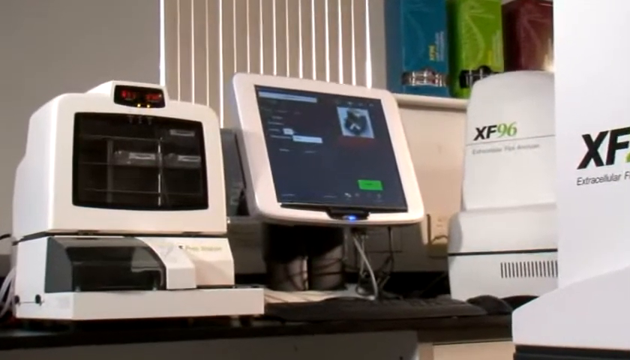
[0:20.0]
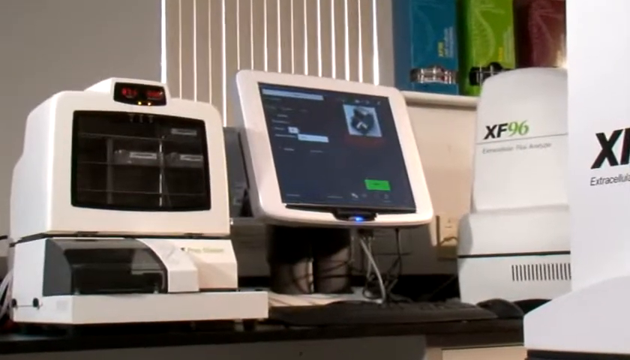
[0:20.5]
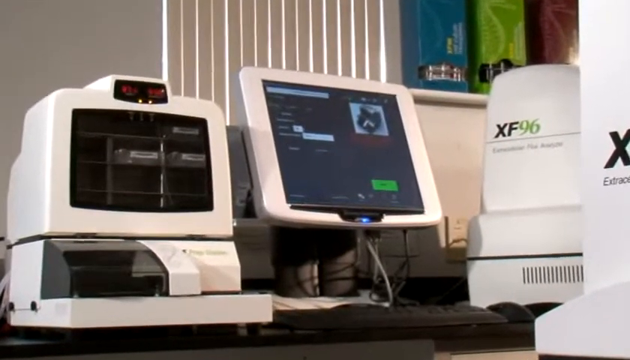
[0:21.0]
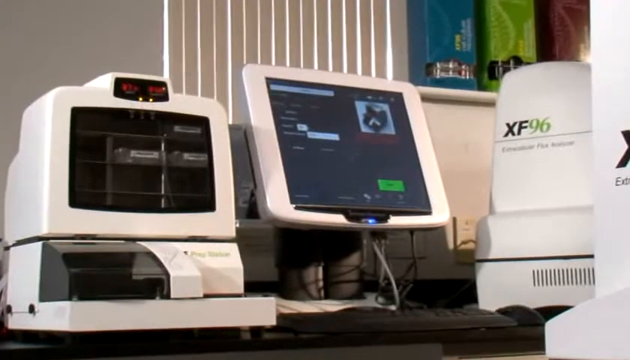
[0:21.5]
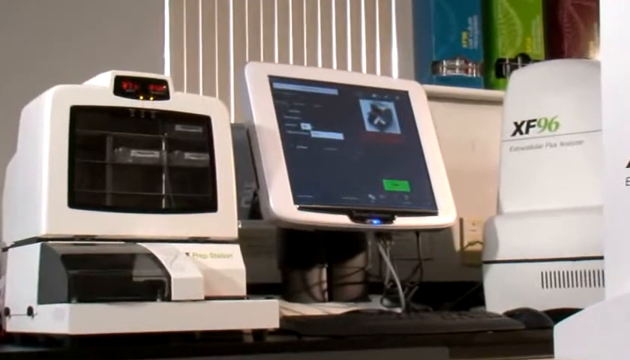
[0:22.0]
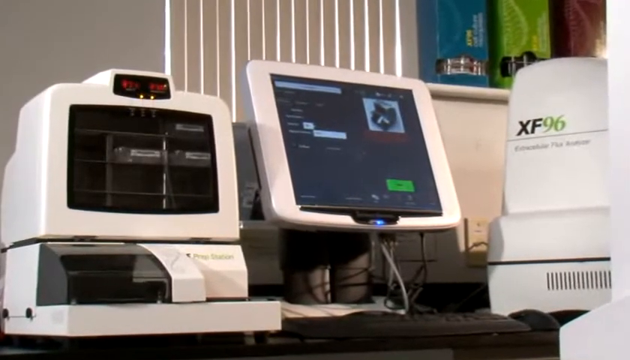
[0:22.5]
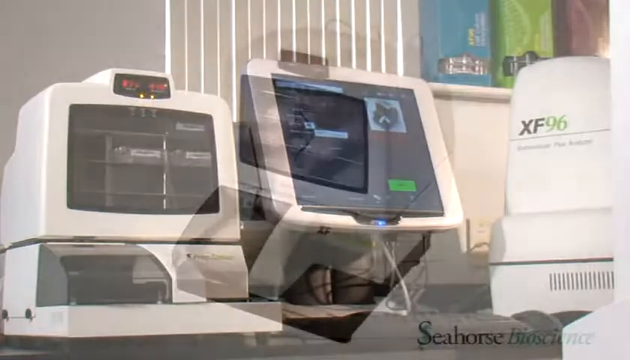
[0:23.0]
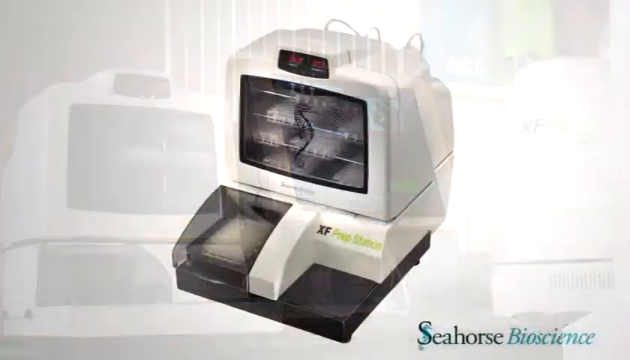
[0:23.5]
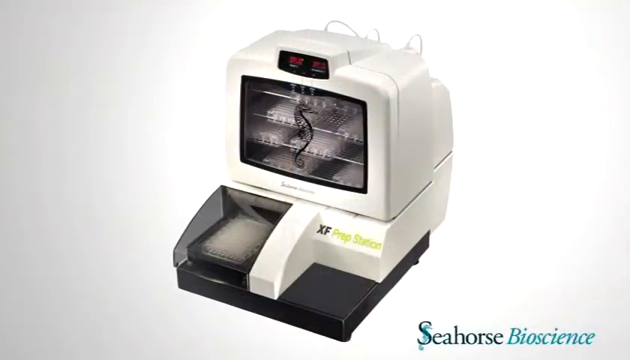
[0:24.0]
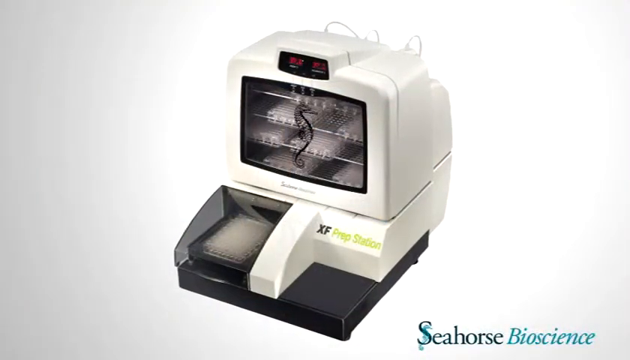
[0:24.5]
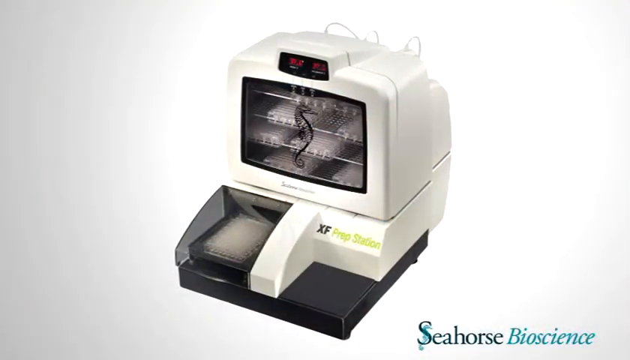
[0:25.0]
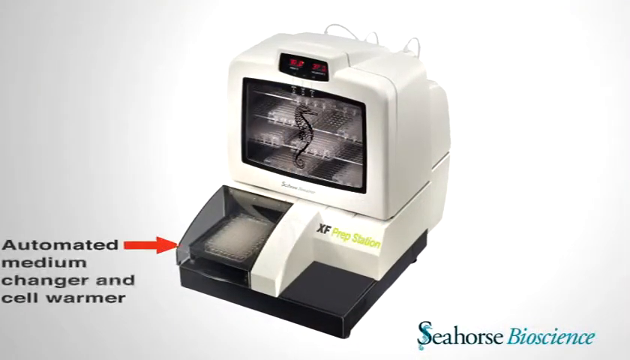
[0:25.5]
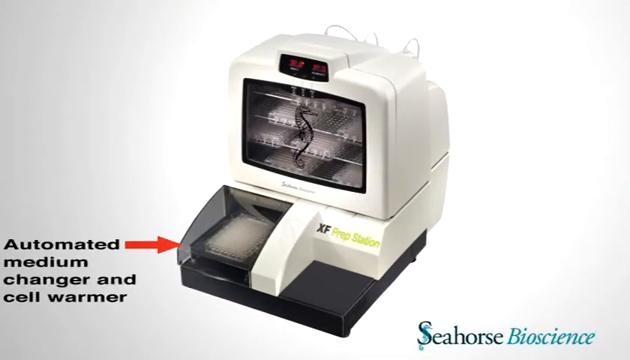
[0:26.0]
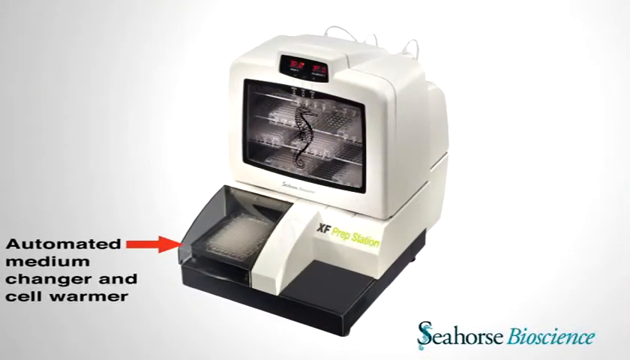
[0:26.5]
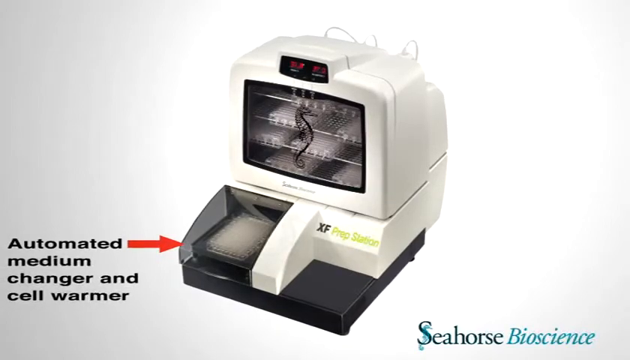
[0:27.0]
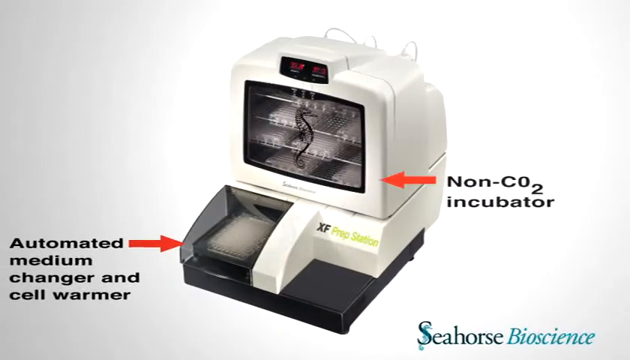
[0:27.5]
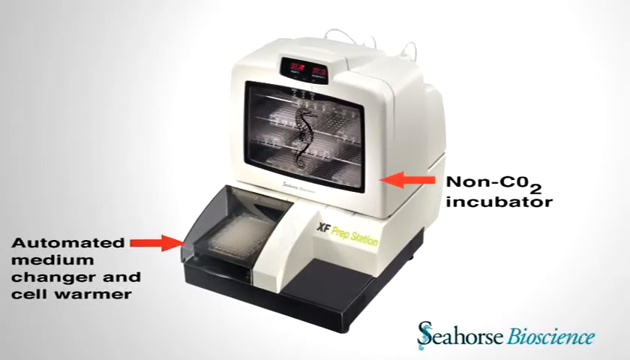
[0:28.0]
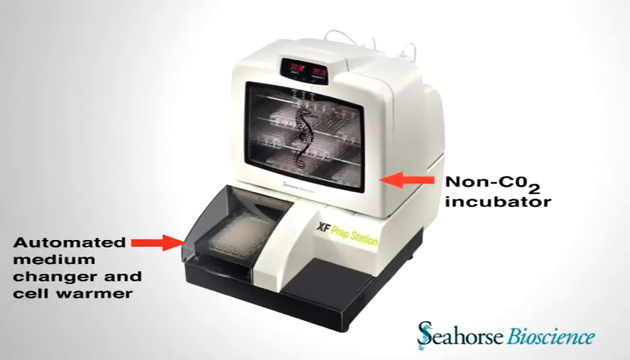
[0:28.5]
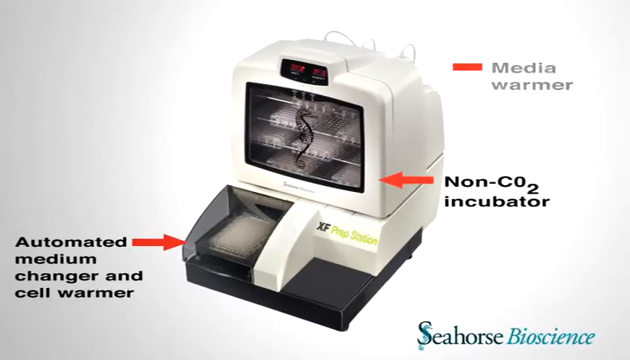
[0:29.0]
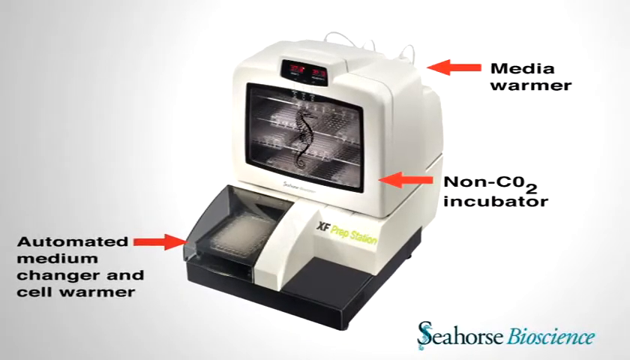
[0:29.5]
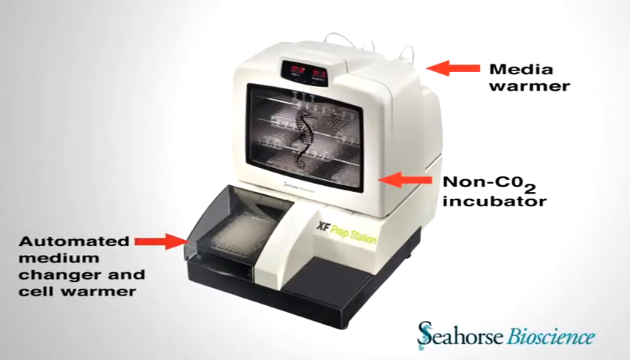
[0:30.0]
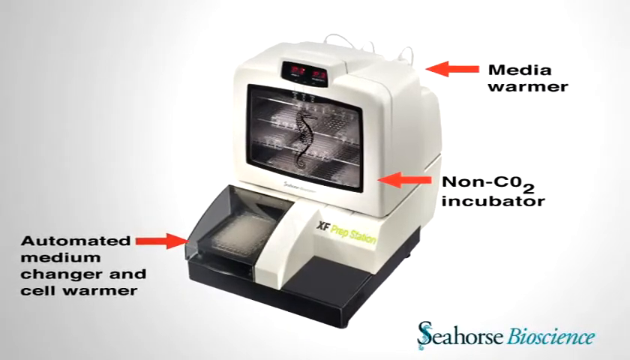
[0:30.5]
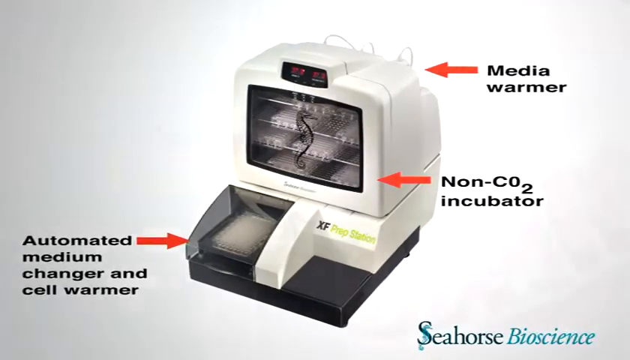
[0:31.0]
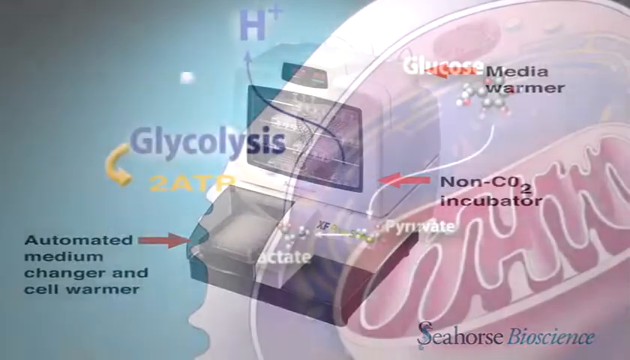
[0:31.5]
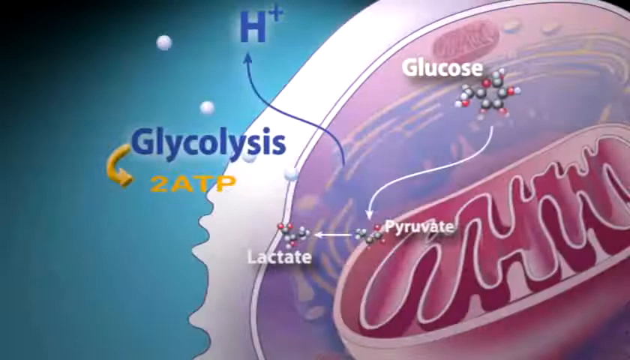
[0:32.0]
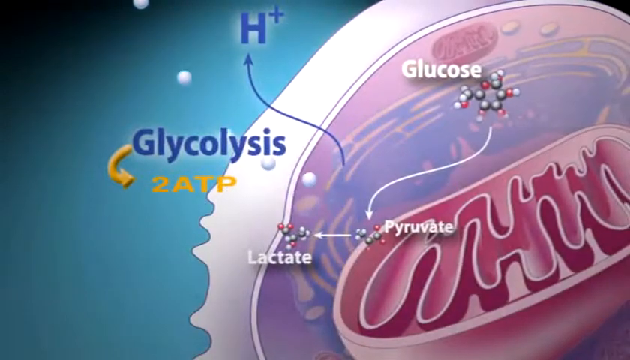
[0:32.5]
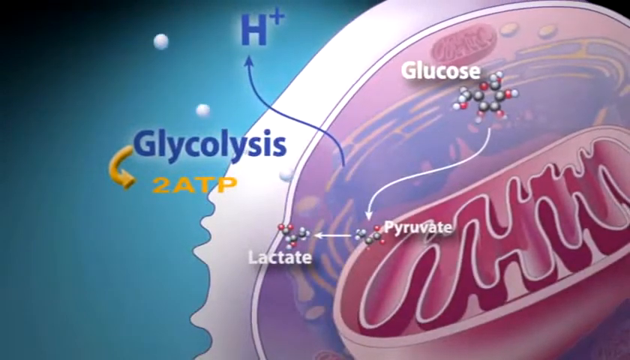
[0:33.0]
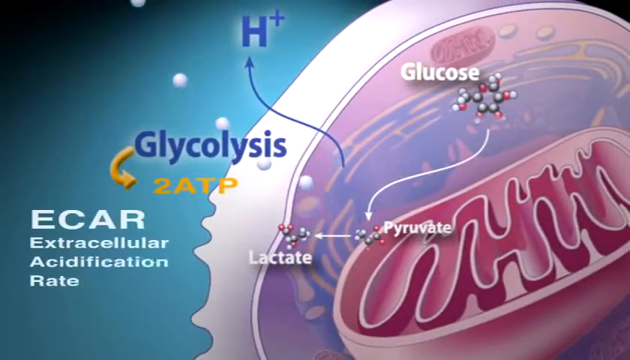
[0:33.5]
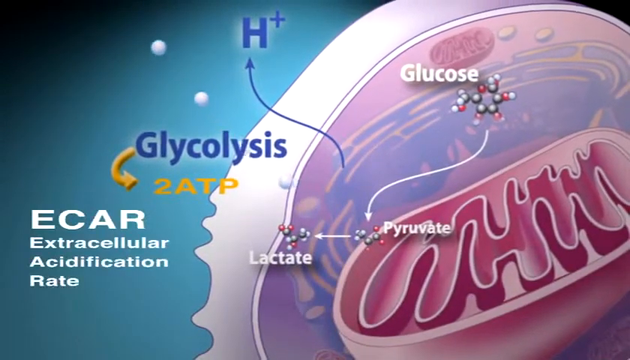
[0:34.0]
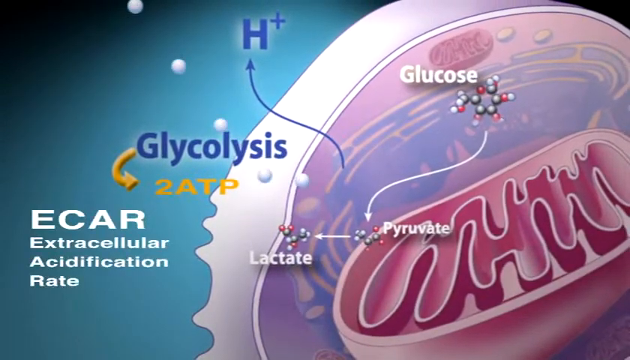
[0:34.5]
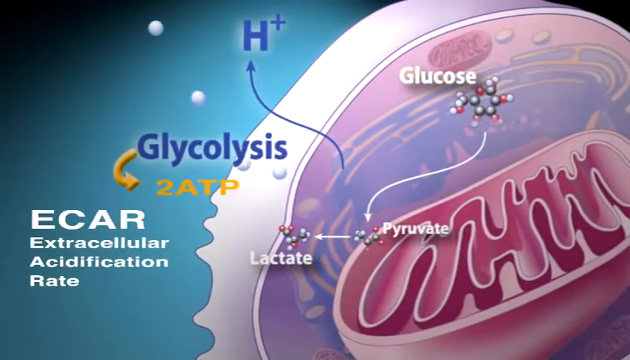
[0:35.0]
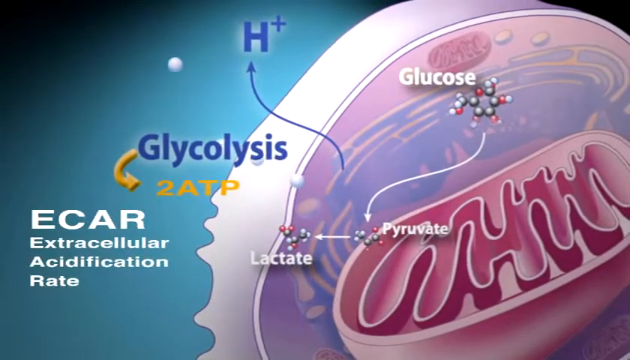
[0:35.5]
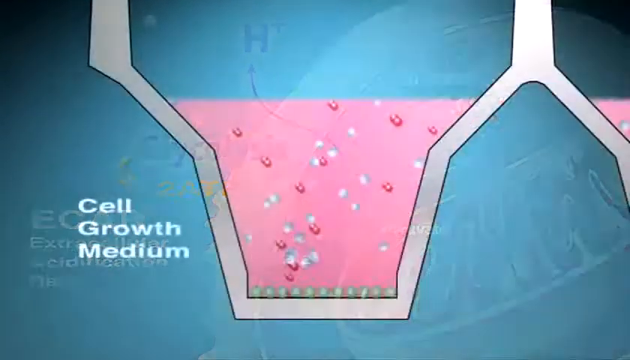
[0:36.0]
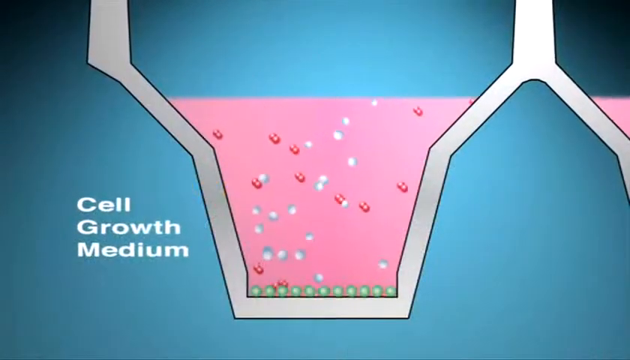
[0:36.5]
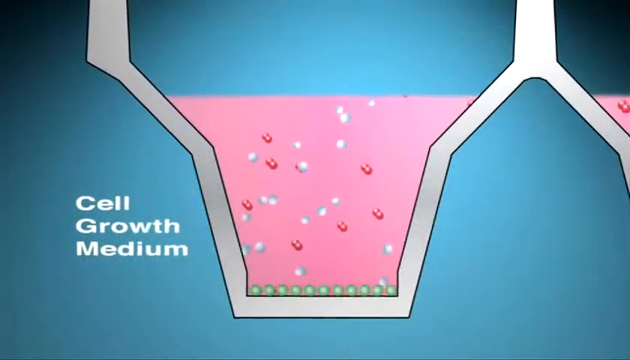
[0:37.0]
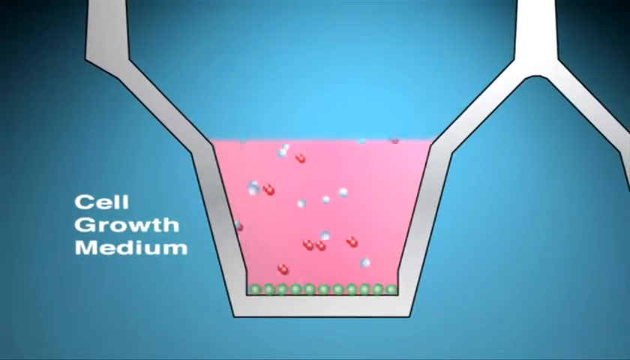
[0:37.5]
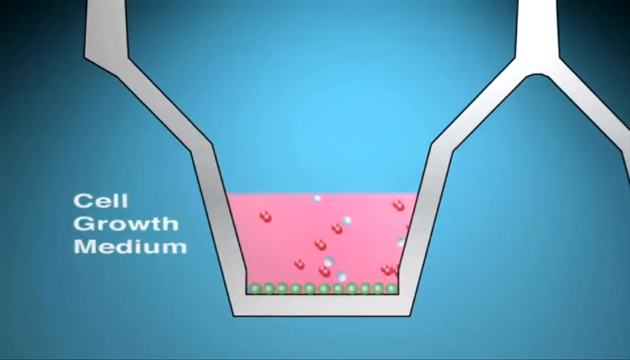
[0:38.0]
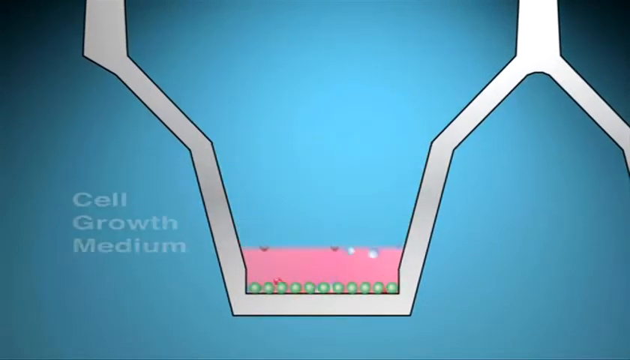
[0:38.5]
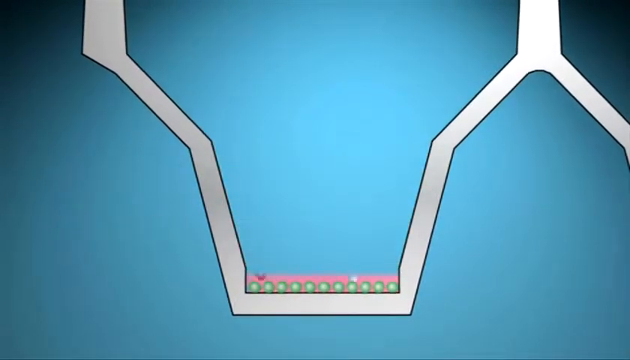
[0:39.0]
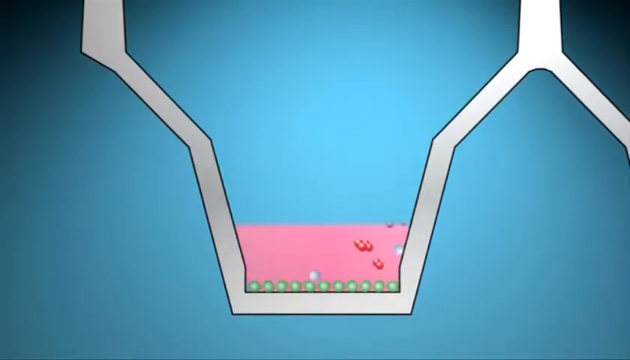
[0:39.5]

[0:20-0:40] A close-up shows two machines side by side: an XF prep station on the left and an XF96 analyzer on the right. The machines are white with dark LED screens and are placed on a desk in front of a closed window blind. The camera pans slowly closer. The screen then changes to an image of the XF prep station, which looks quite bulky and resembles an old 1990s computer monitor in its size and shape. It has a white frame and an LED at the top with red numbers. Illustrations pop up in the lower left corner with a red arrow pointing to a part of the machine, labeled "automated medium changer and cell warmer". Another arrow points from the right side of the screen to the machine, labeled "non-CO2 incubator". A third illustration from the upper right is labeled "media warmer". Next, animated illustration graphics show a chemical process with glucose, followed by a different animation labeled "cell growth medium".